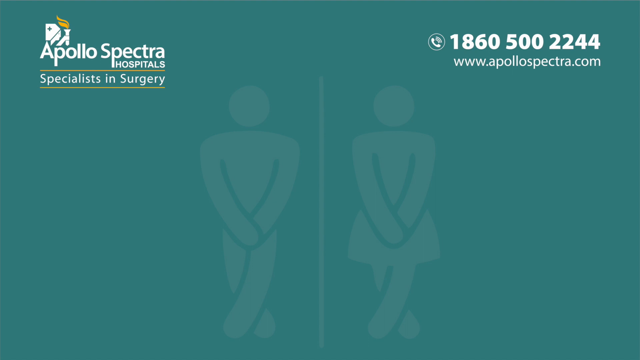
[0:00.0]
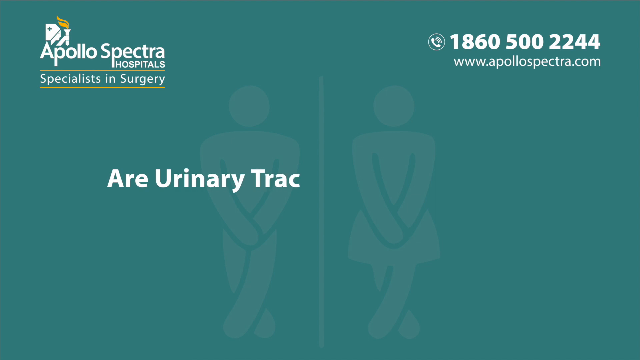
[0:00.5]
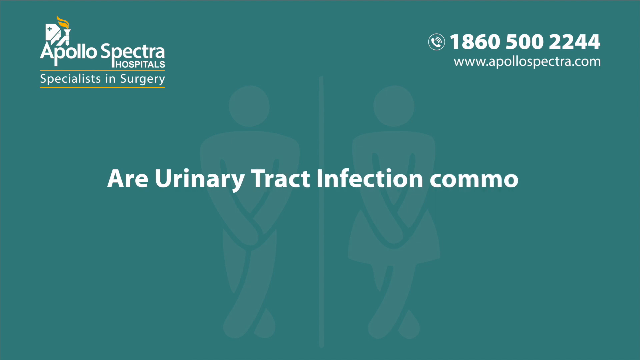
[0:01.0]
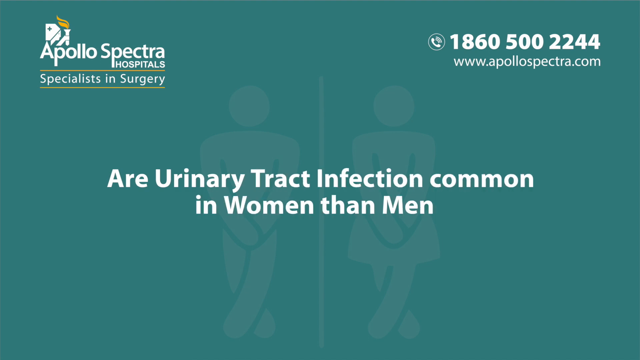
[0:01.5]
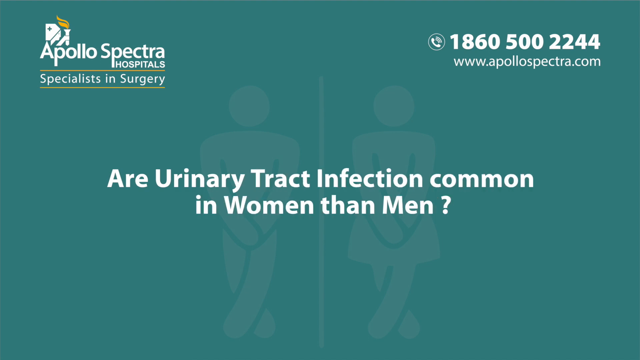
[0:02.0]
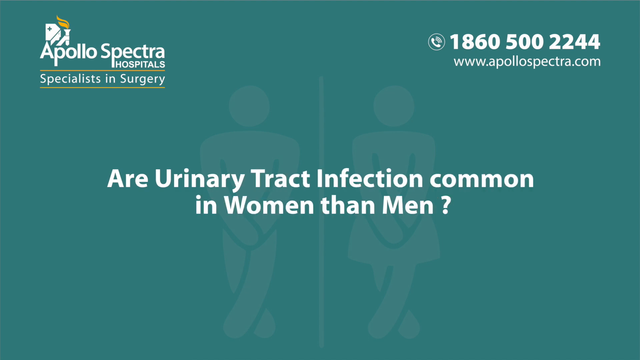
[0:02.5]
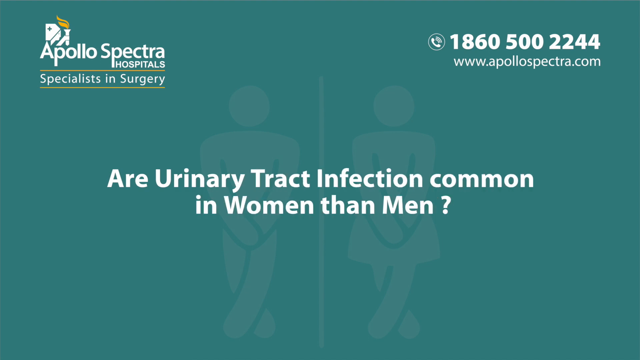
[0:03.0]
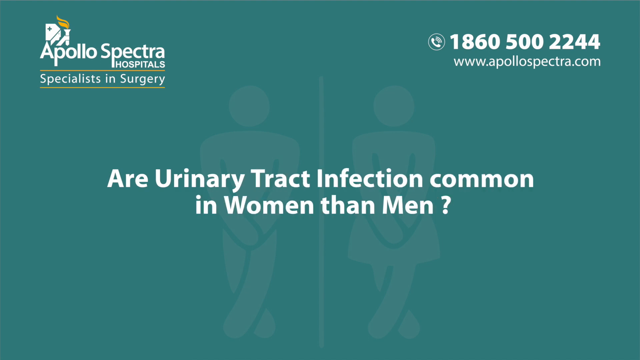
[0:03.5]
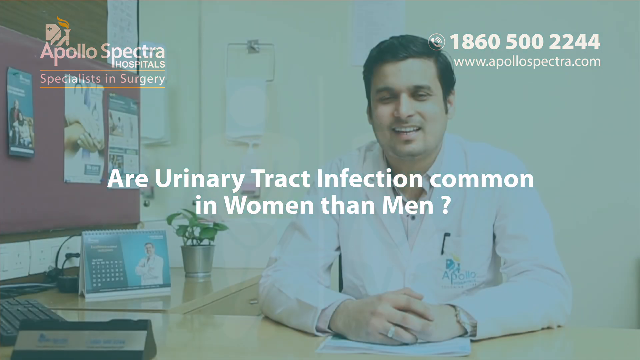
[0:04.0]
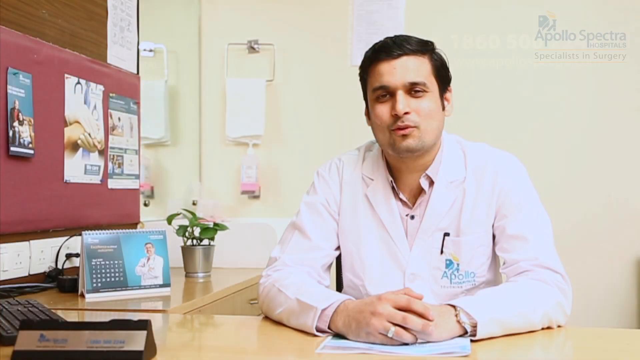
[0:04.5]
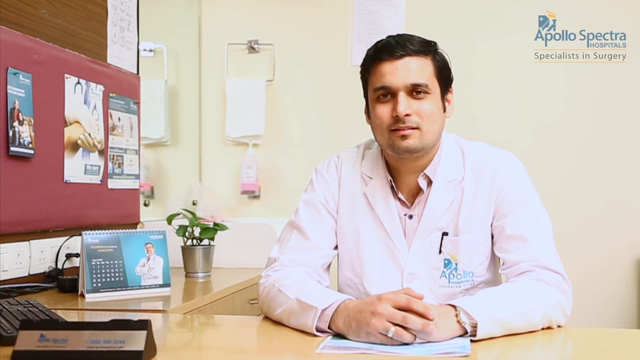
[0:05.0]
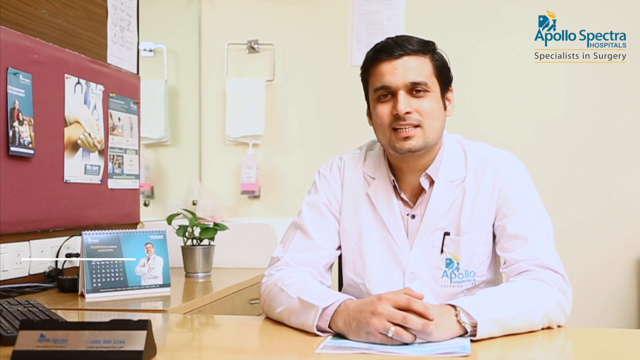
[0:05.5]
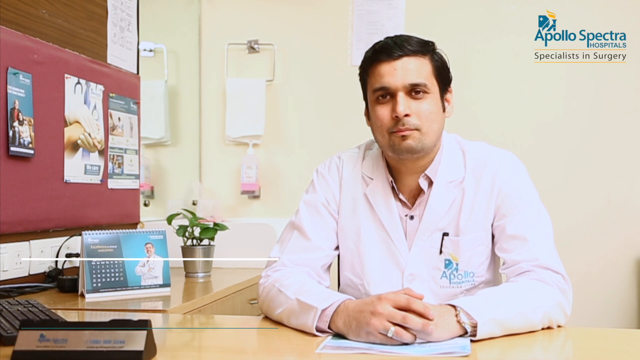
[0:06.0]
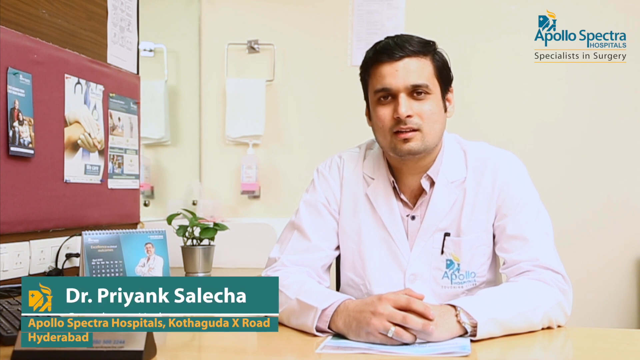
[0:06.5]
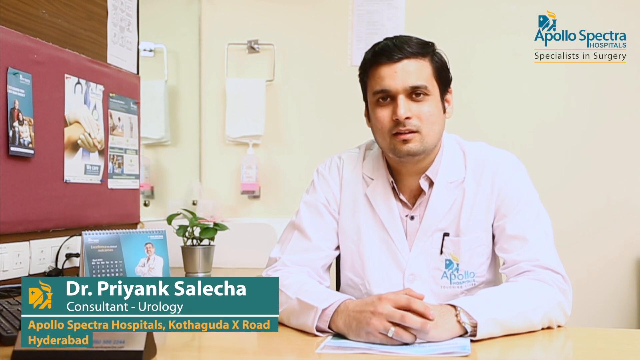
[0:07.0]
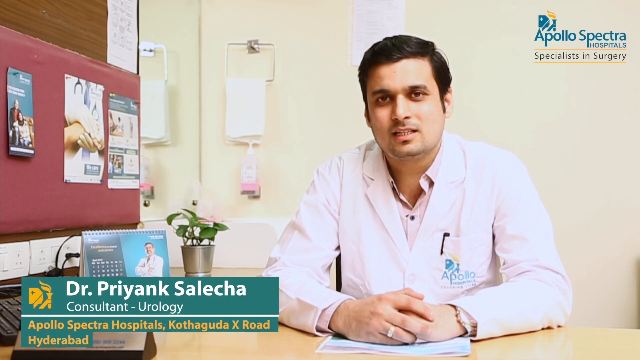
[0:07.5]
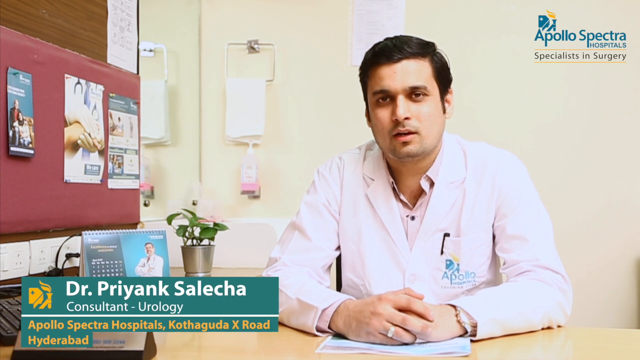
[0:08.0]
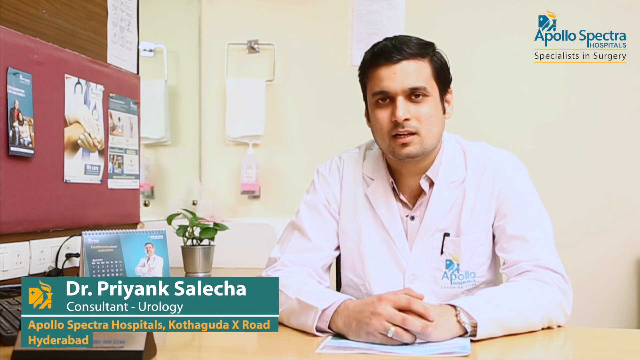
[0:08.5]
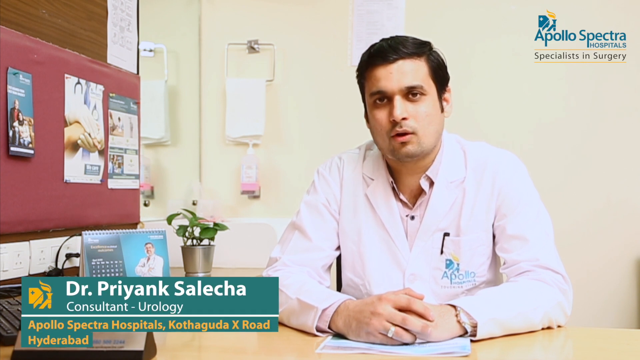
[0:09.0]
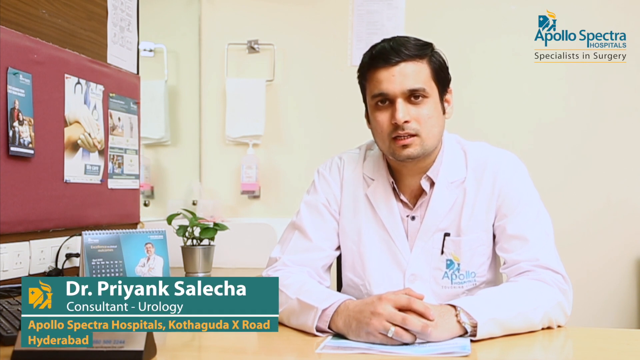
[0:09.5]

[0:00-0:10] The video is produced by Apollo Spectra Hospitals. Against a teal green background, text reads "are urinary tract infection common in women than men?" There is a picture of a man, like the simple outline image seen indicating a male bathroom, and a simple outline of a woman; both are crossing their legs and putting their hands over their groin region. The scene then changes to a video of a man sitting down at a desk area, talking to the camera.